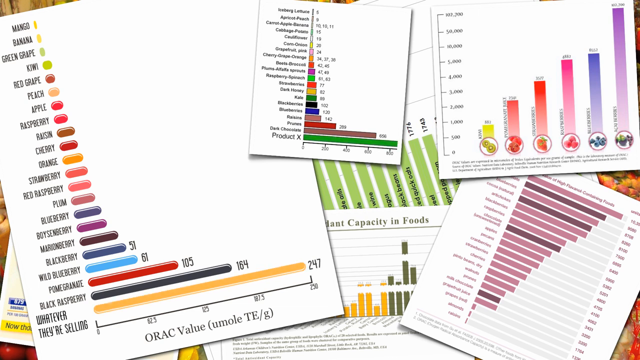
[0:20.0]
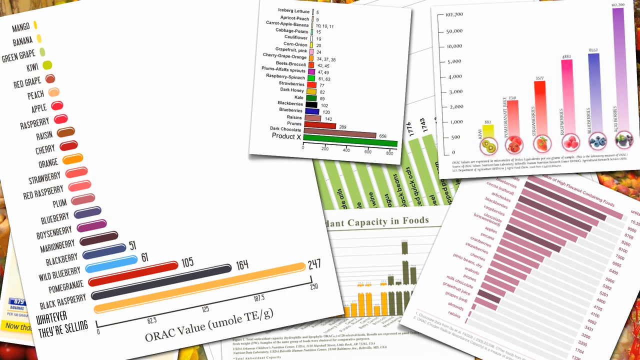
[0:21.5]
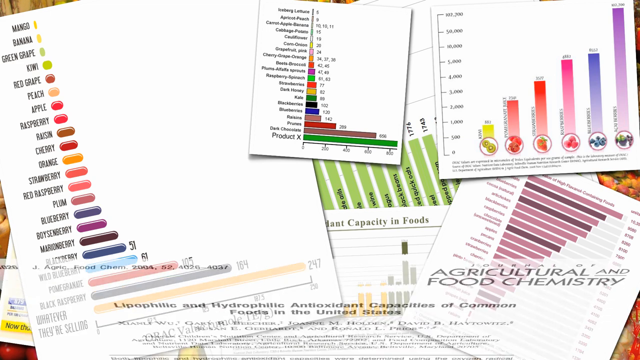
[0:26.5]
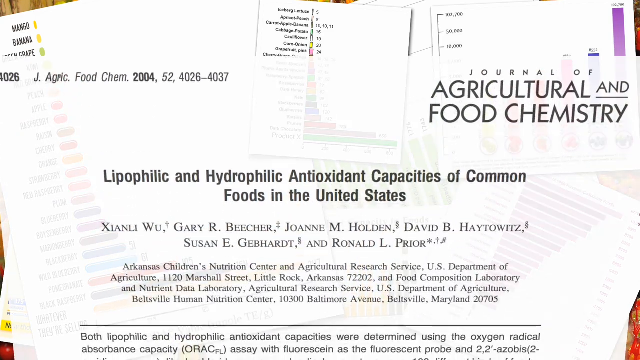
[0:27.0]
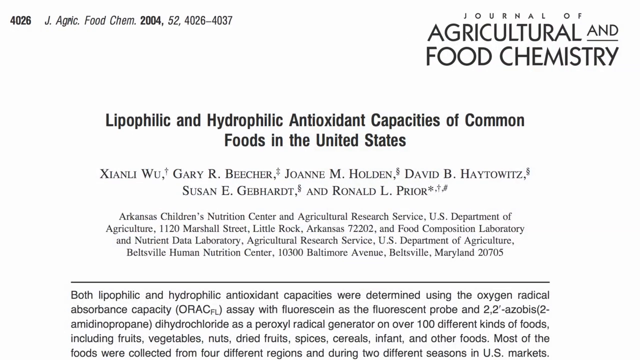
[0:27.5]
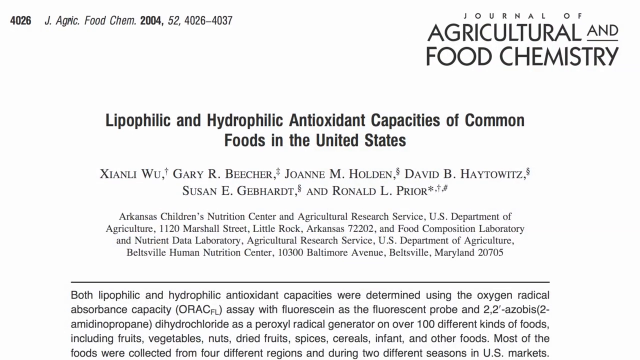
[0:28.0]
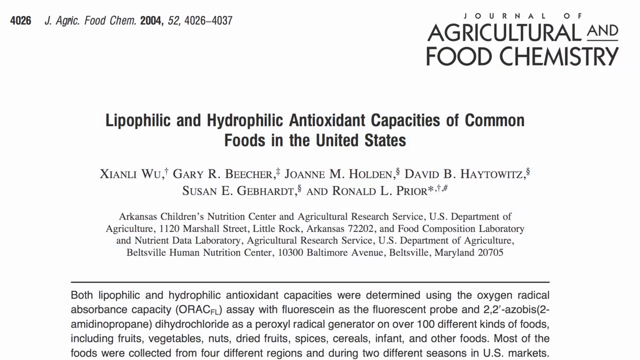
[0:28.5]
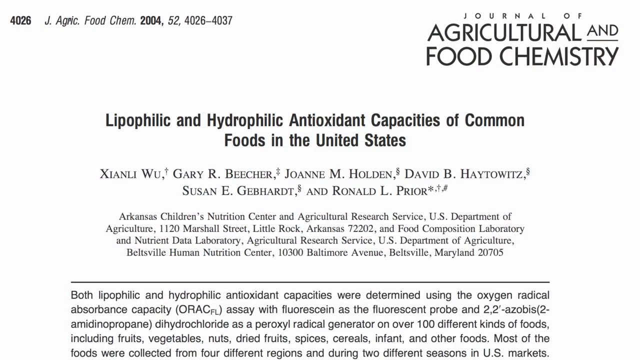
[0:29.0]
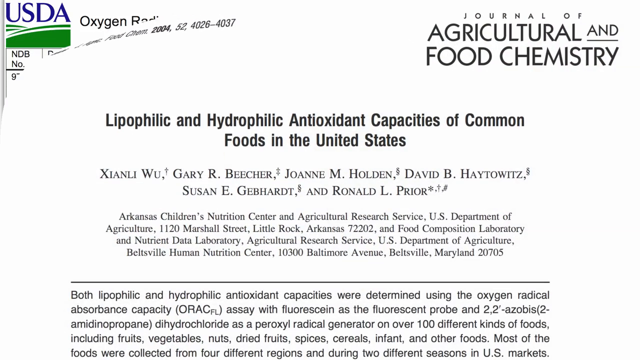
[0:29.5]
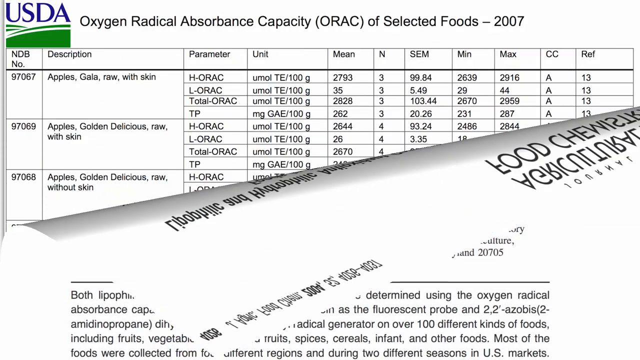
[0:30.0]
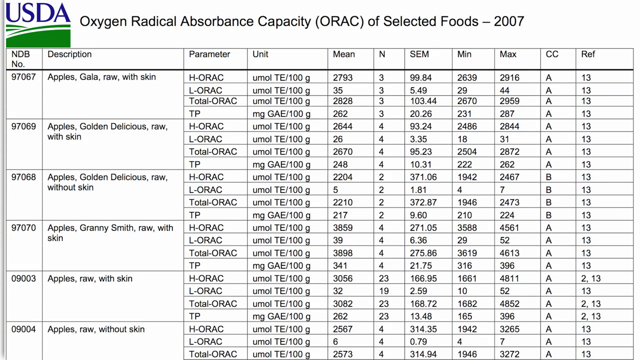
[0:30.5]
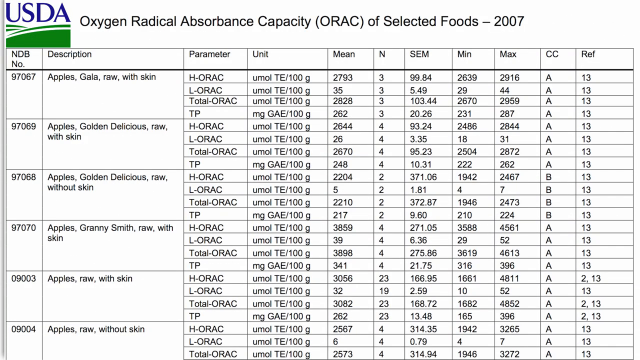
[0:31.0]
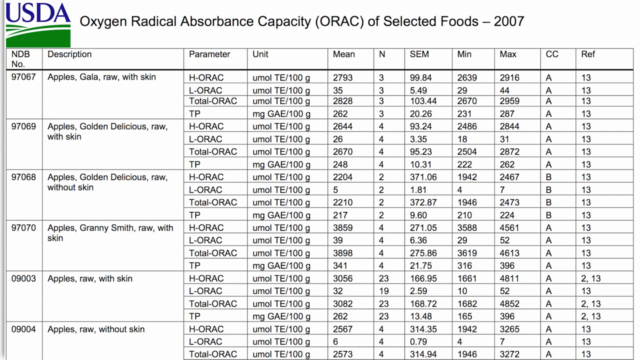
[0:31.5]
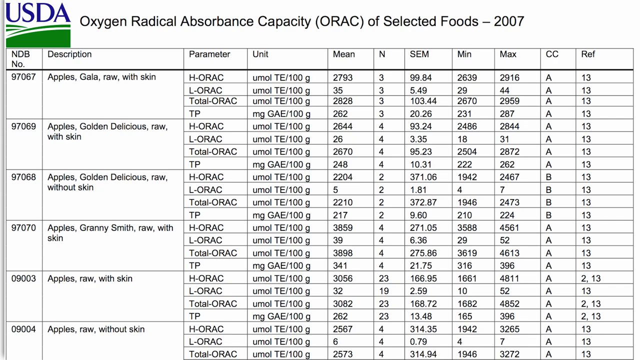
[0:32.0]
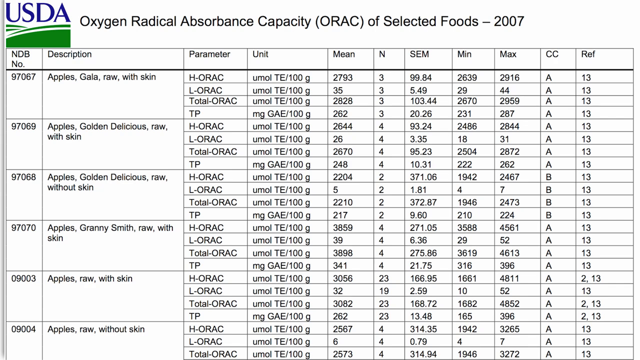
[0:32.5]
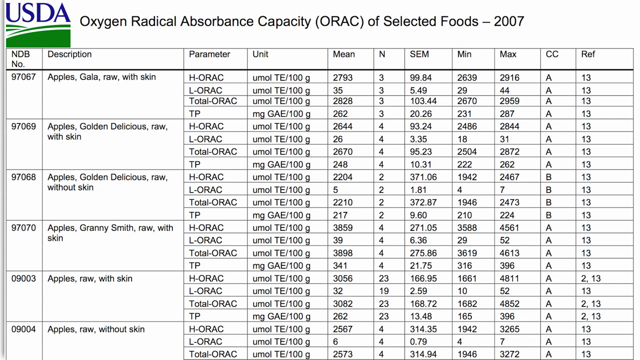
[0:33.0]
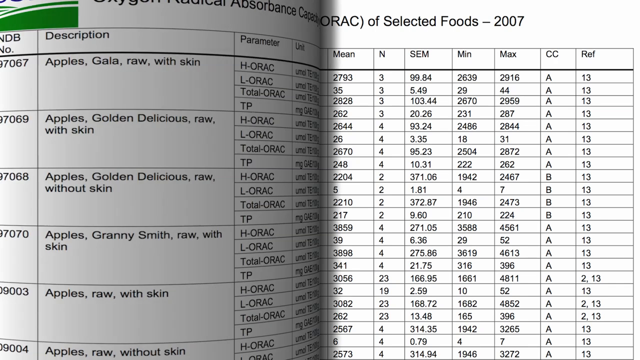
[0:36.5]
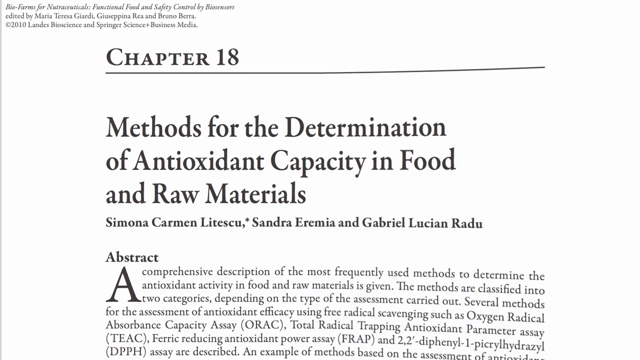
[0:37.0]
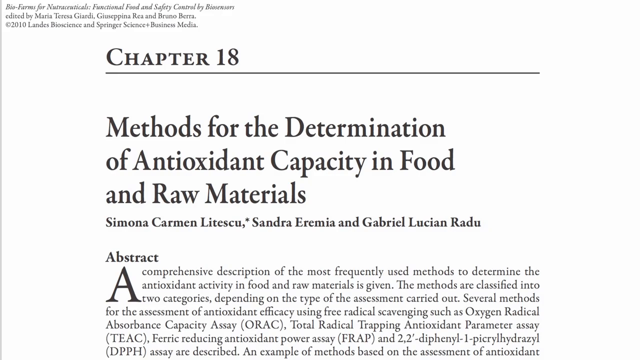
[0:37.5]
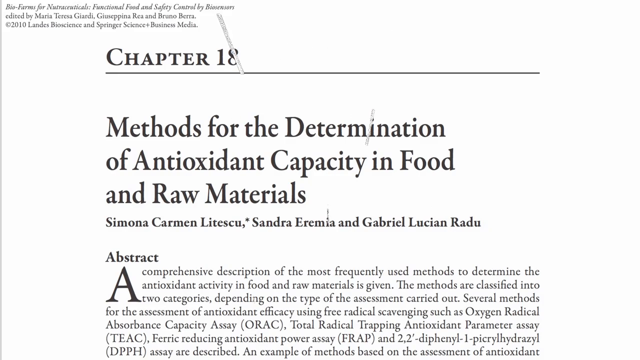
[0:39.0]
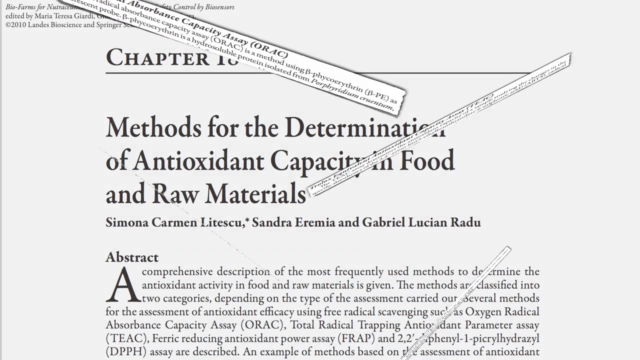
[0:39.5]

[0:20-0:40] Information on fruits is shown. A piece of paper lists fruits with bar graphs in various colors next to them. The smallest, at the top, is a mango with a yellow bar, and the largest, at the bottom, is gold. A letter from the agricultural department appears, as well as a USDA letter with a graph on it. An excerpt from a chapter shows information on nutrition. An agriculture and food chemistry letter appears, then its edge rolls over and it rolls away. Excerpts are pulled from another informational sheet and appear individually in front, giving a close-up look at them.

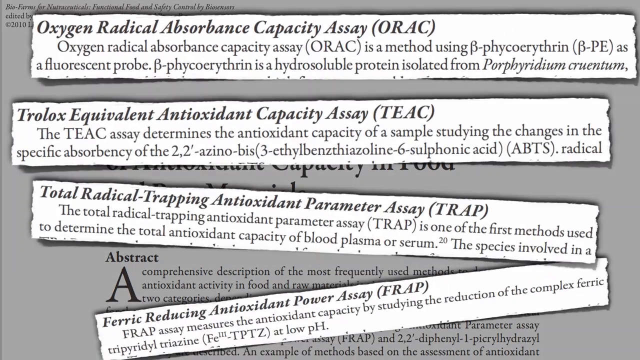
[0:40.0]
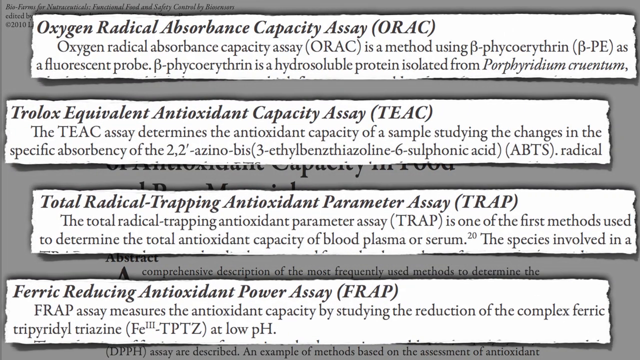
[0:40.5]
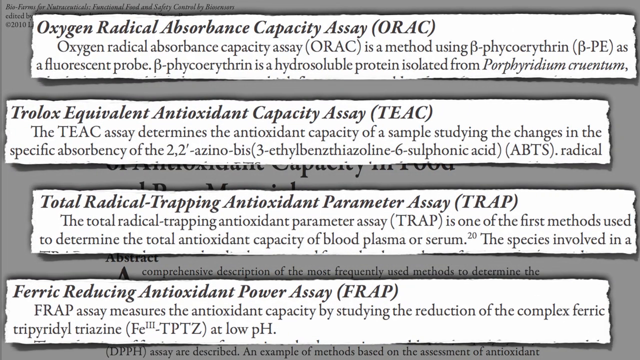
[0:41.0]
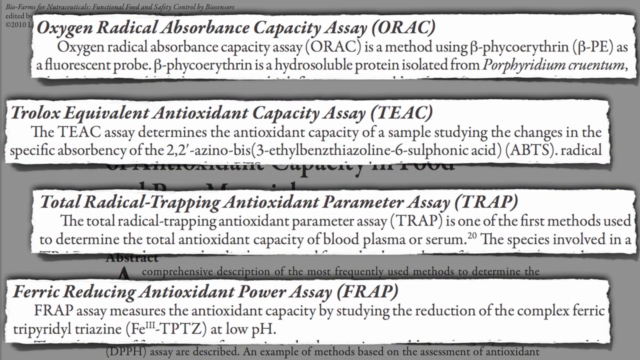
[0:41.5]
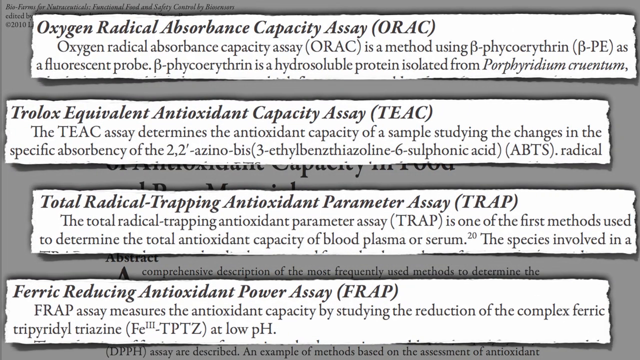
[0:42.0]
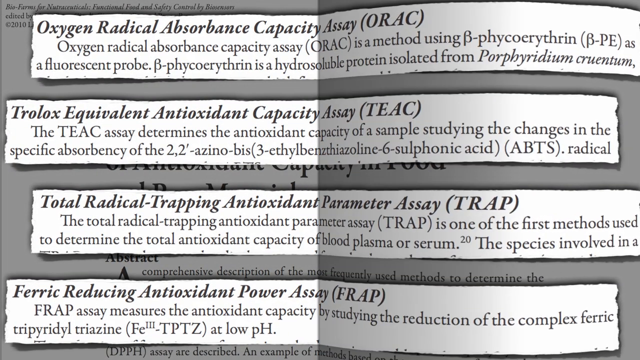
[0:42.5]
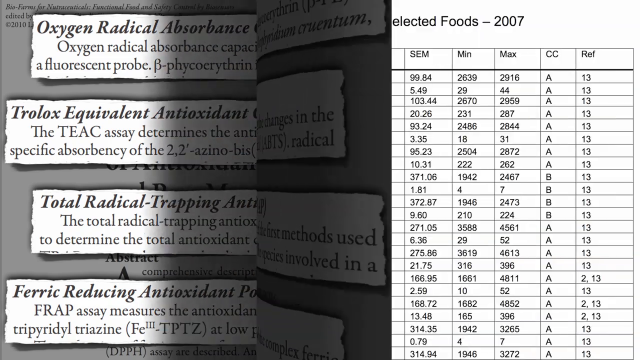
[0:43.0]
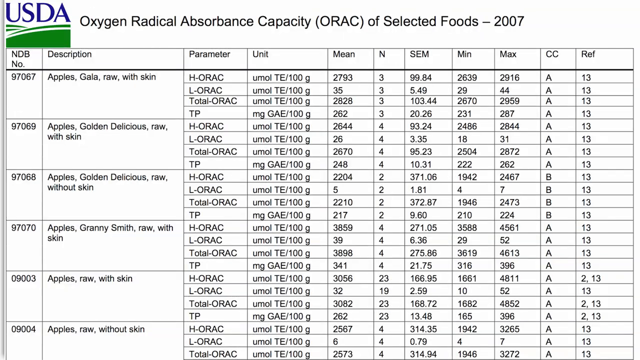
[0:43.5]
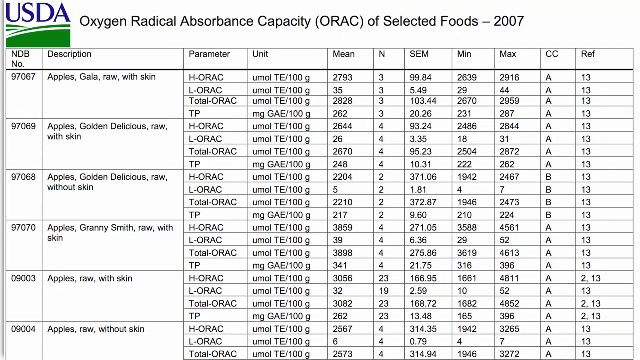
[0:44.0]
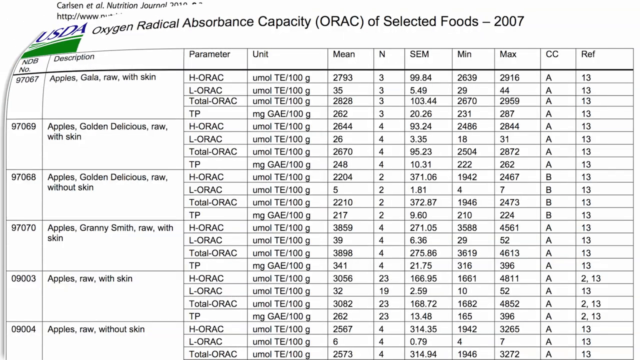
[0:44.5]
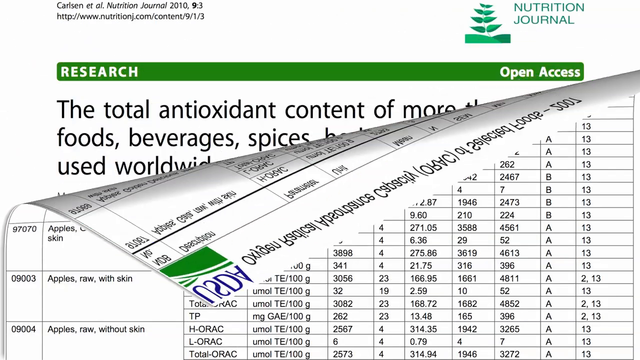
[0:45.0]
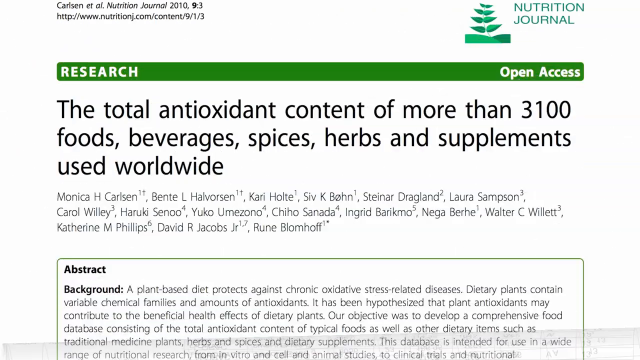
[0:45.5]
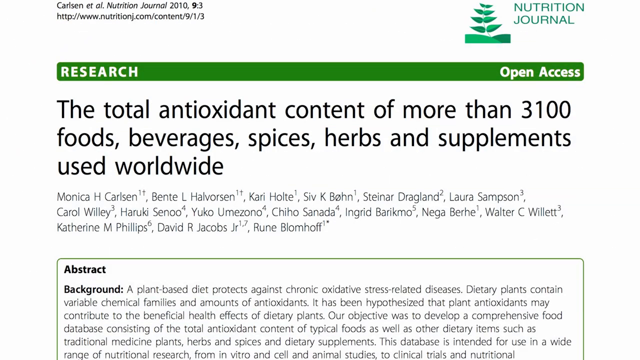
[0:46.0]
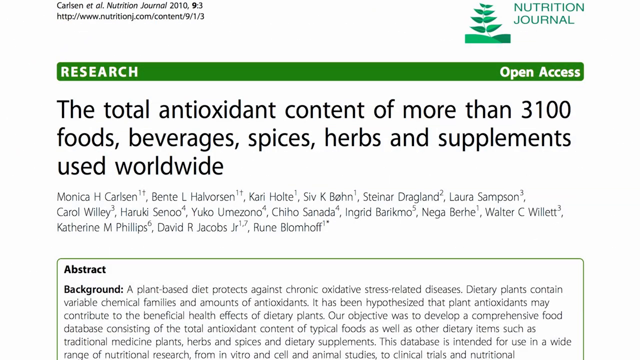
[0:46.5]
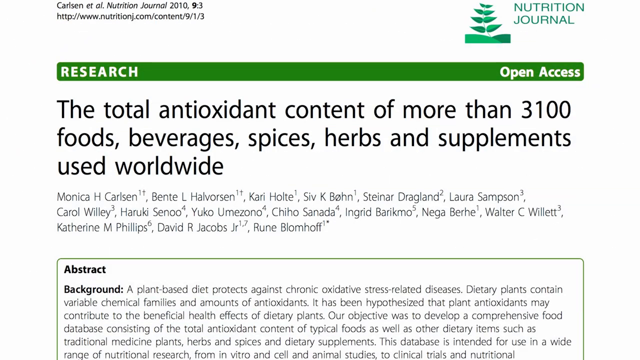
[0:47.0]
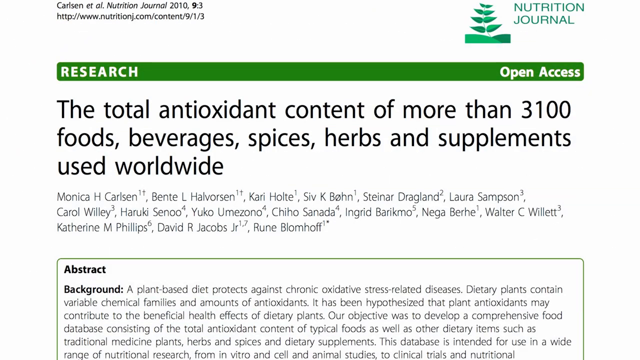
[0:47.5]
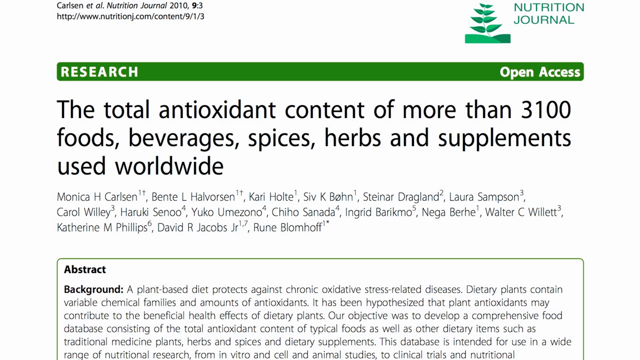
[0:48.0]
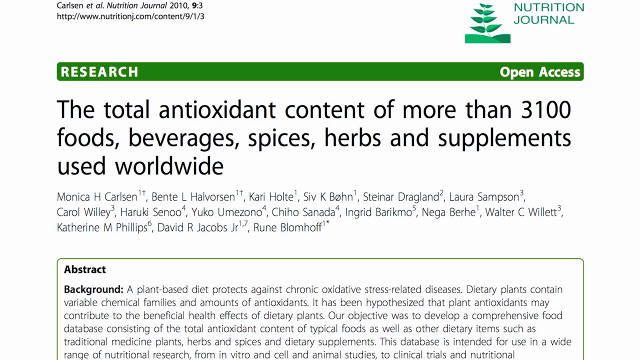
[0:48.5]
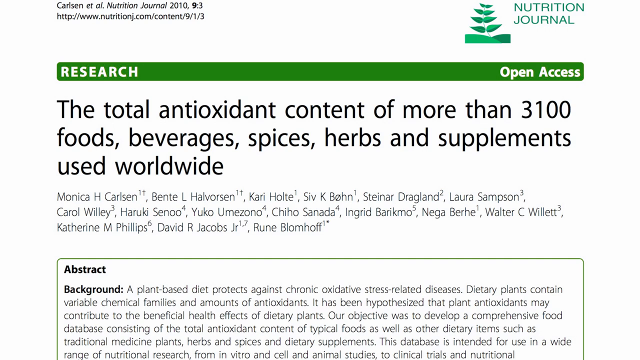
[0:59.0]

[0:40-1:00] Excerpts from a letter regarding nutrition are shown, about oxygen absorbency. A USDA graph peels away and disappears. Then a piece of research says "open access" and is from the Nutrition Journal. It says "a total antioxidant content of more than 3,100 foods, beverages, spices, herbs, and supplements used worldwide". A small abstract background view of part of that research is visible, with a green bar at the top. Next, a black and white graph shaped like honeycombs appears and then disappears very quickly. Excerpts from a research letter are shown again, with the letter visible behind them, but only the portion that says "Abstract", with a capital A, underneath. These are also black and white.